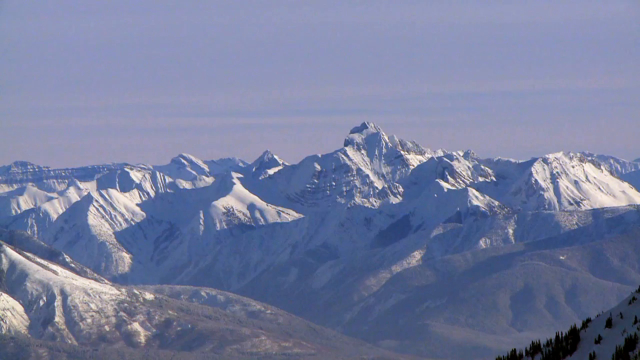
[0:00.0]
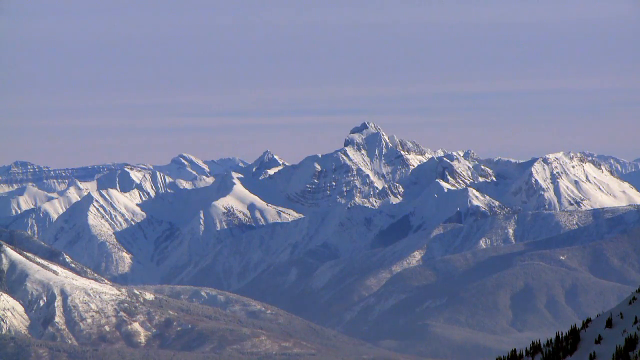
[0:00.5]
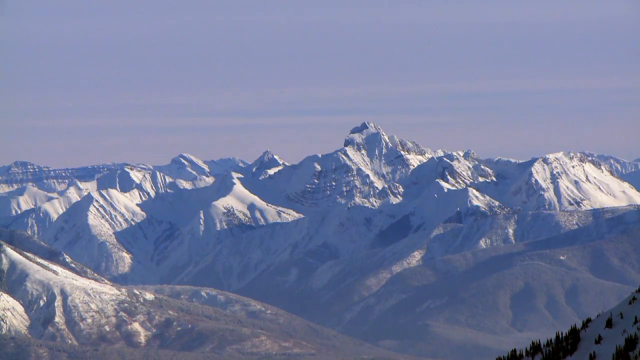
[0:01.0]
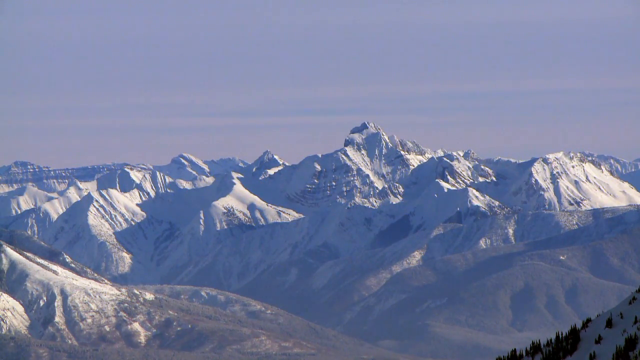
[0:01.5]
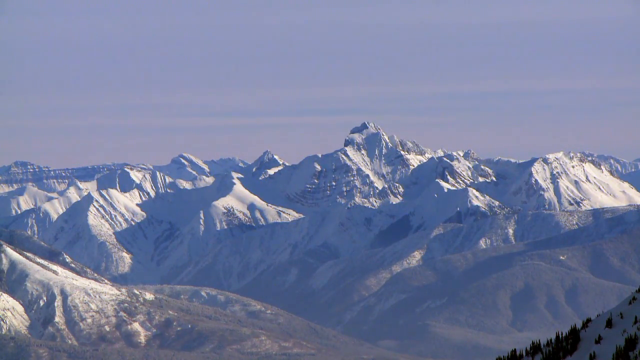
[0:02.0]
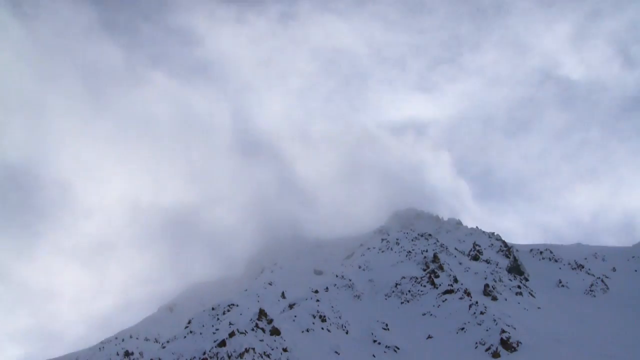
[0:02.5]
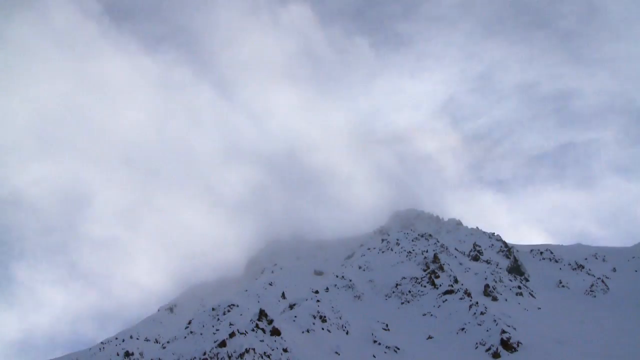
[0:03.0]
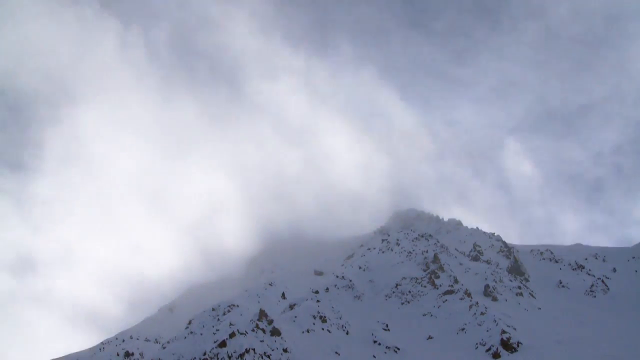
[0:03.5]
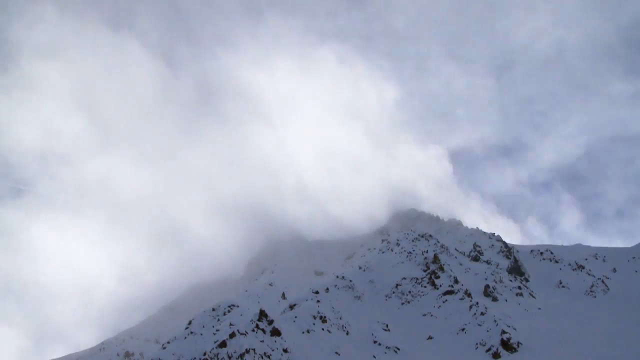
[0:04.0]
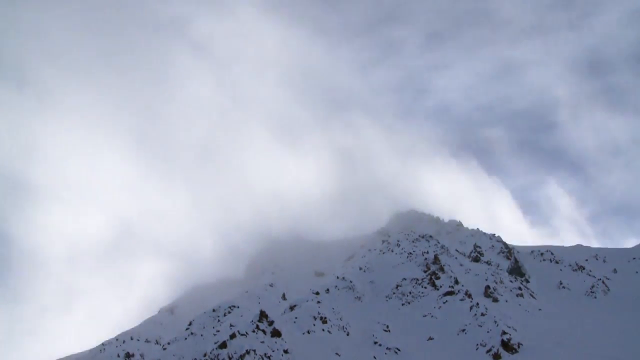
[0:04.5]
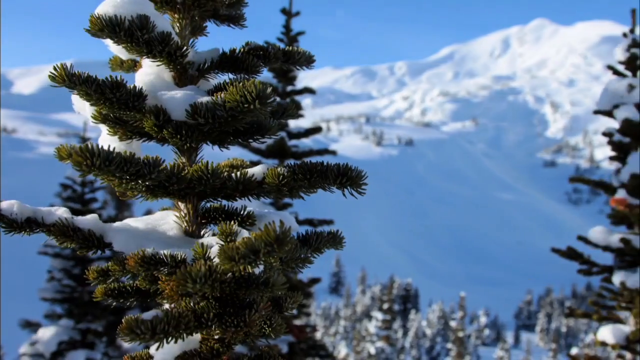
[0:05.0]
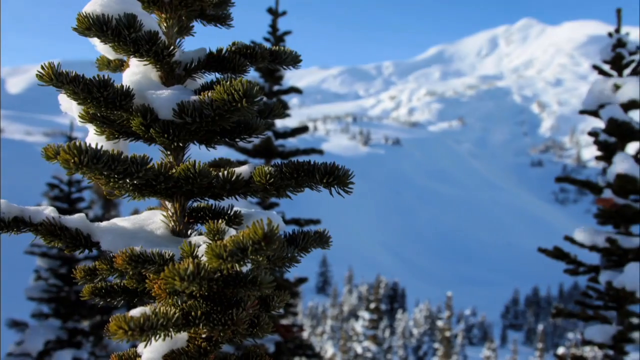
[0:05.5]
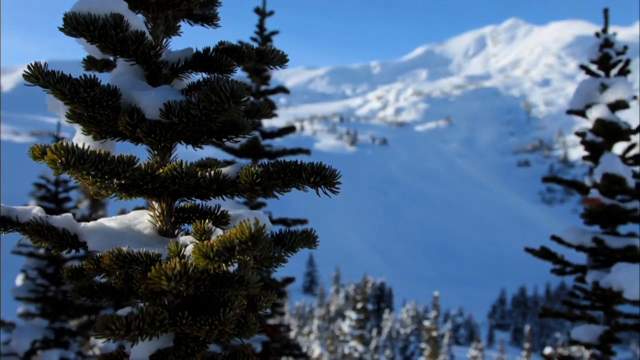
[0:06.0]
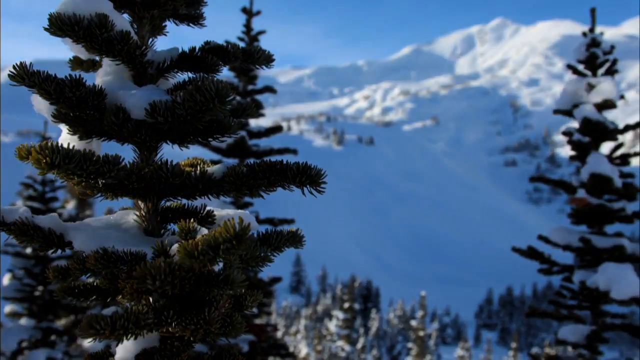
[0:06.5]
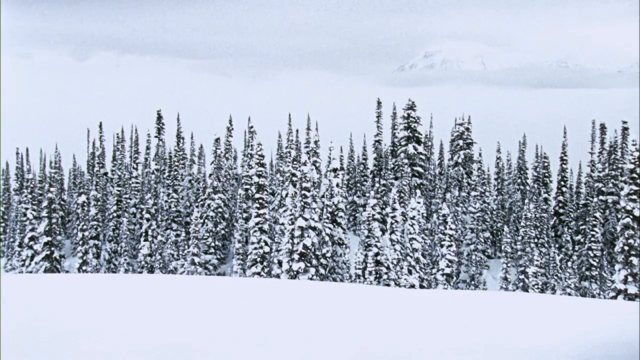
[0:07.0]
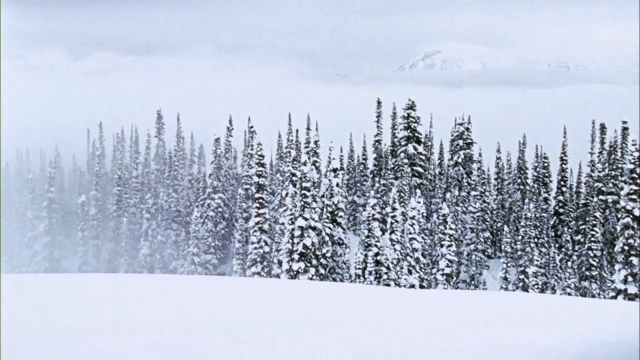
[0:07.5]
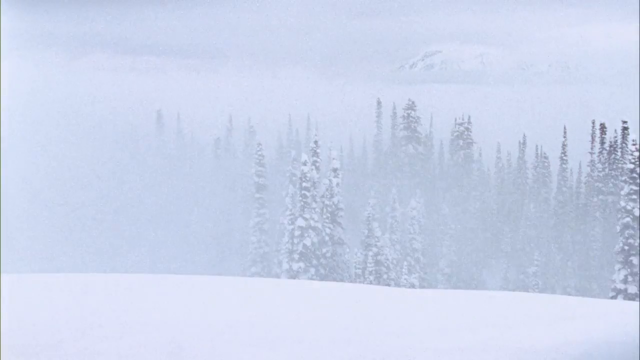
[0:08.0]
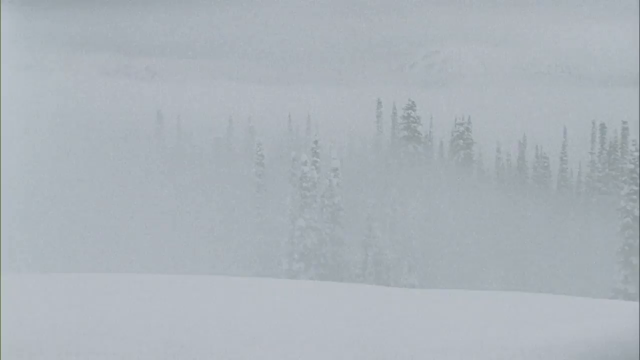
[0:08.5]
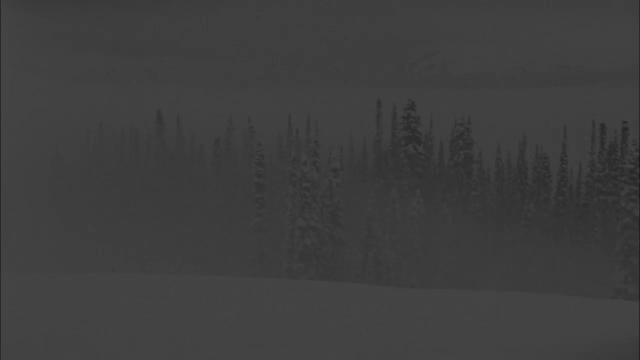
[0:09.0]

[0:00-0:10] Snowy mountains appear in the distance, with some sun seemingly hitting them from the side. The next shot is an up-close view of the mountain from below, looking upwards, with foggy air being blown by pretty quickly. Then an up-close shot shows some pine trees with snow on them, and a large snowy mountain in the distance. Next comes footage of many different pine trees with a lot of snow on them and snow on the ground, as well as a lot of foggy air being blown by.